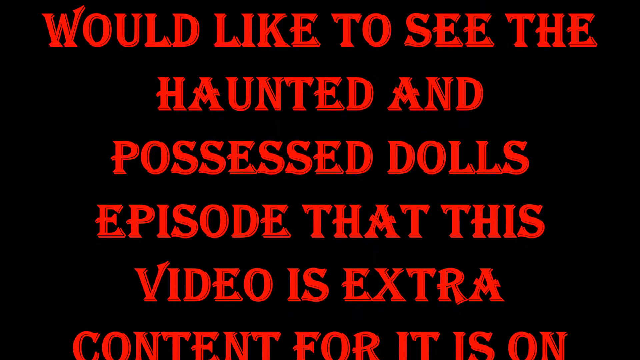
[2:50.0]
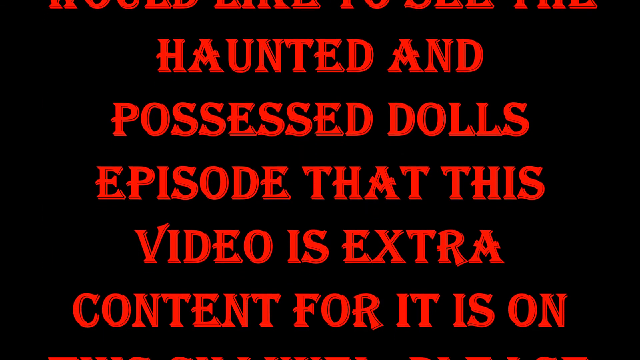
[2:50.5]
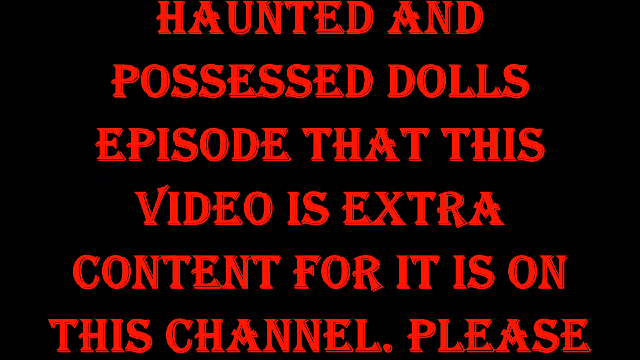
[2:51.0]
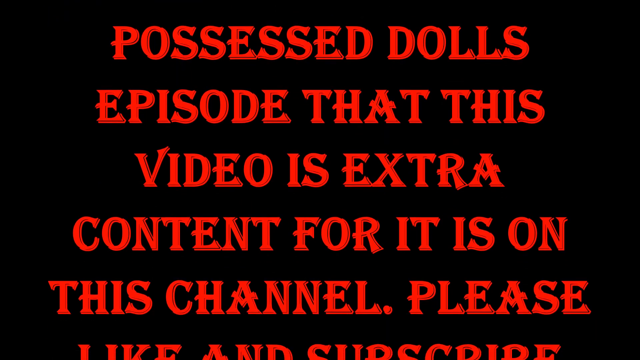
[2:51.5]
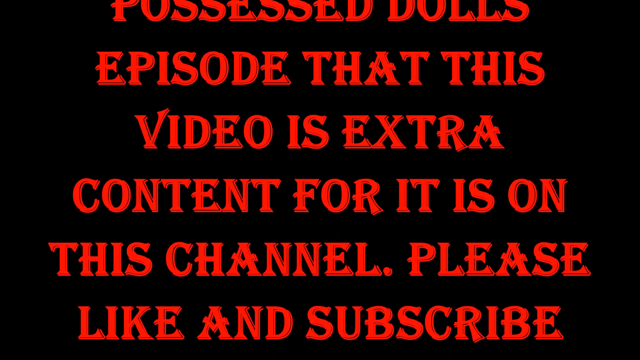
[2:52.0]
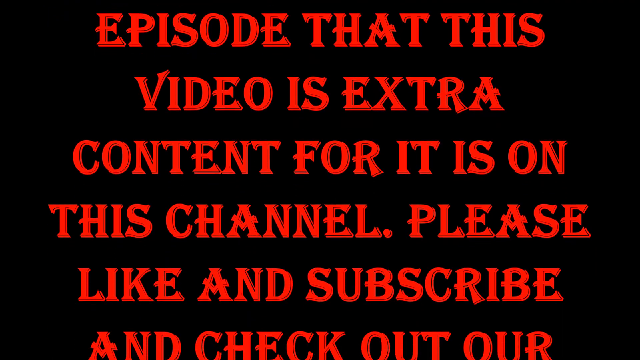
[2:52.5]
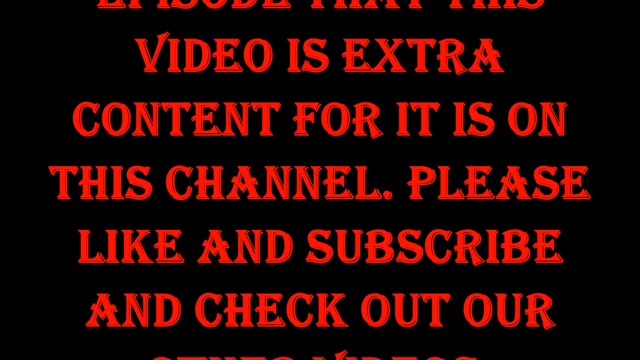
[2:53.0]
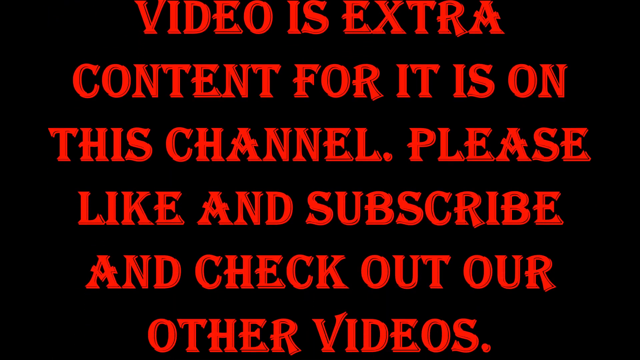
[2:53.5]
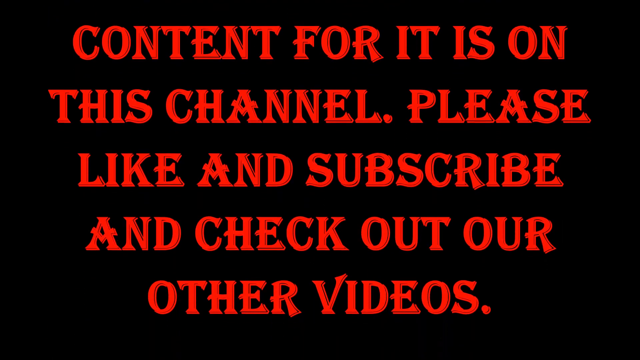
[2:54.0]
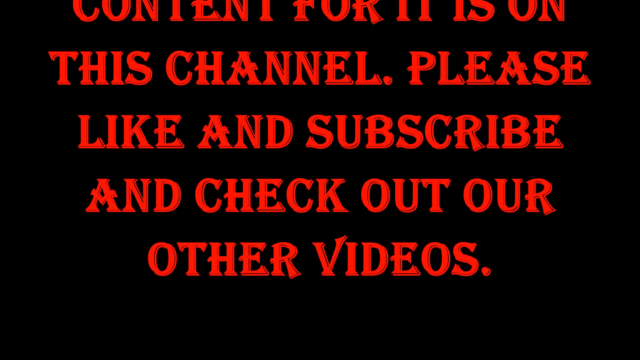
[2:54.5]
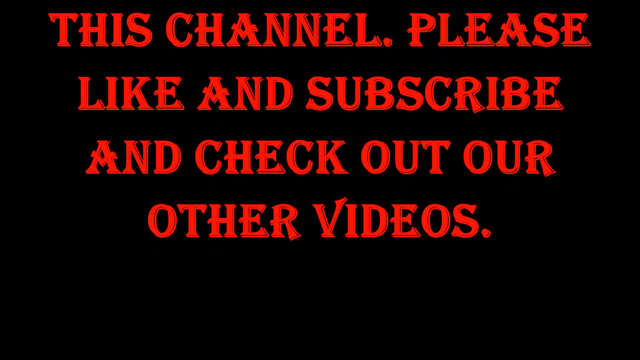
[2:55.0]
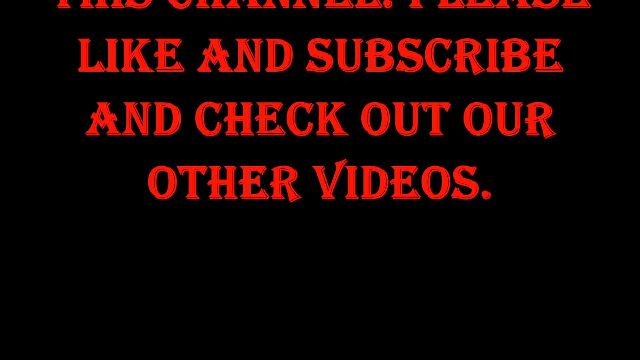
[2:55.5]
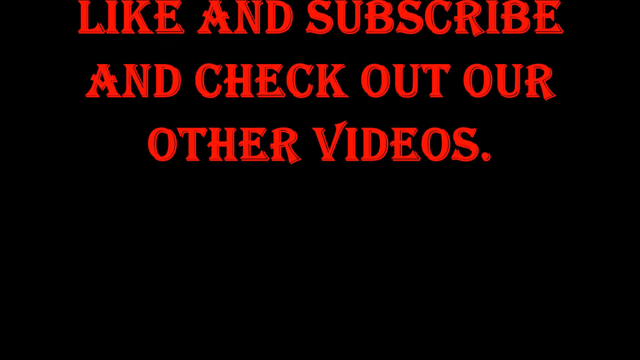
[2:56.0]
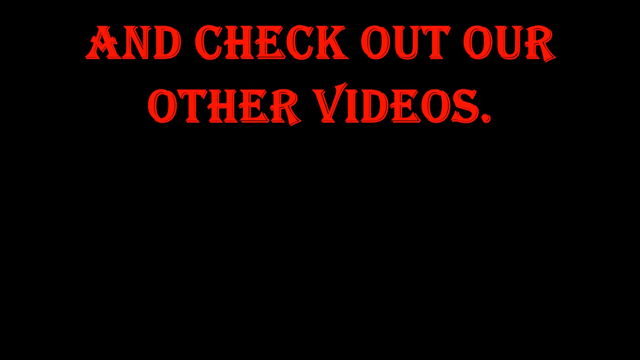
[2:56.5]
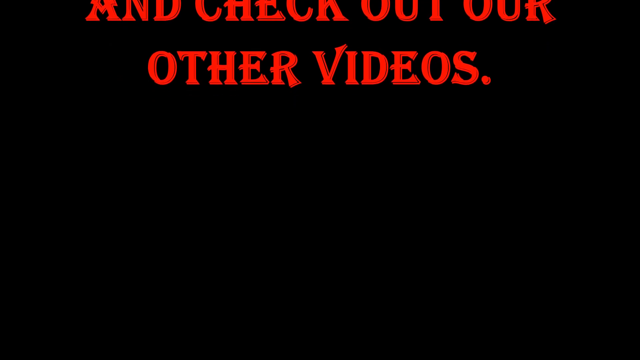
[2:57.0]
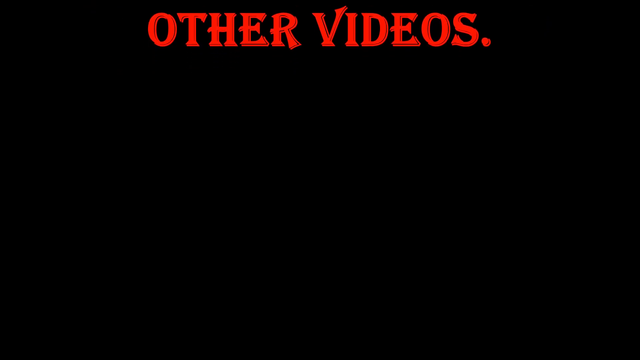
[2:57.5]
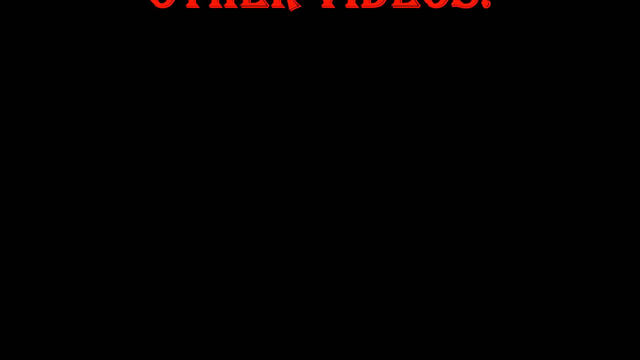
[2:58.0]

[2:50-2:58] The ending screen shows red text: "would you like to see the haunted and Possessed Dolls episode, that this video is extra content for it on this channel, please like and subscribe and check out our other videos". The text appears really slowly, and at the start it vanishes to black. There are a lot of dots in the text, with a dot at the end. It appears to be the outro of a YouTube channel video.